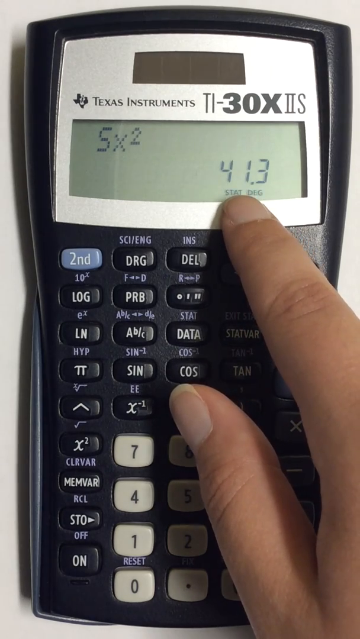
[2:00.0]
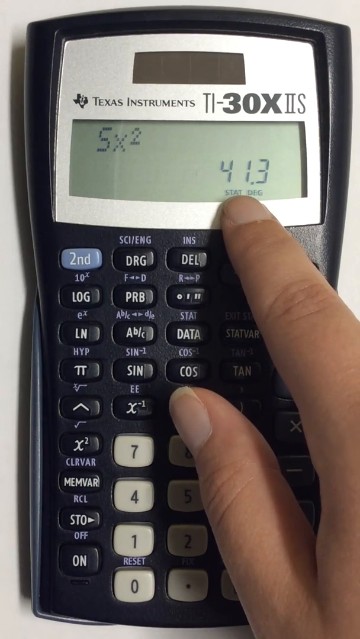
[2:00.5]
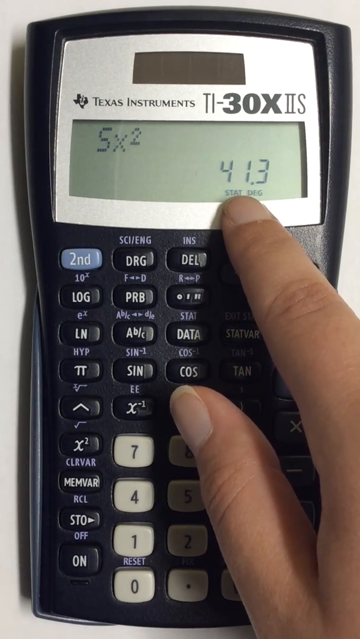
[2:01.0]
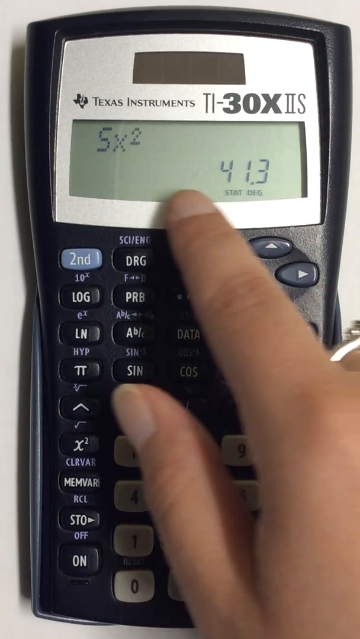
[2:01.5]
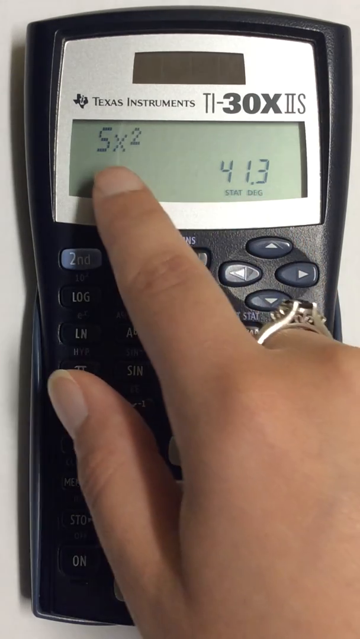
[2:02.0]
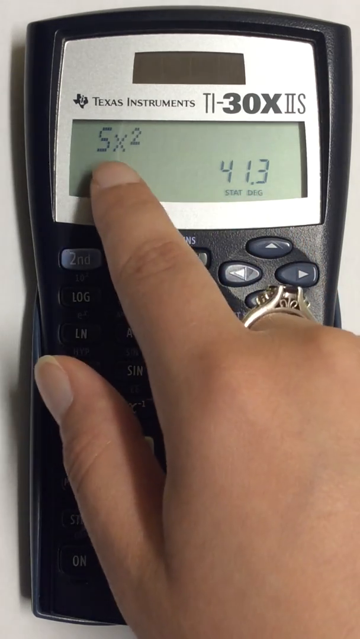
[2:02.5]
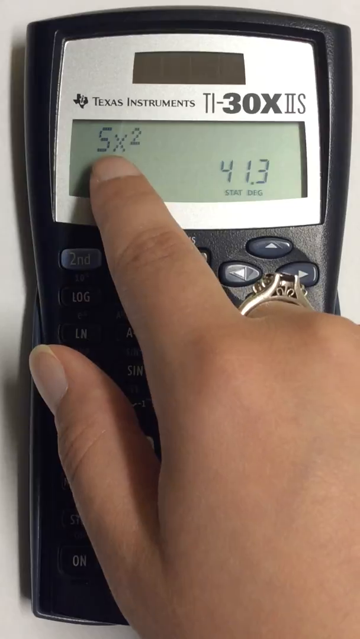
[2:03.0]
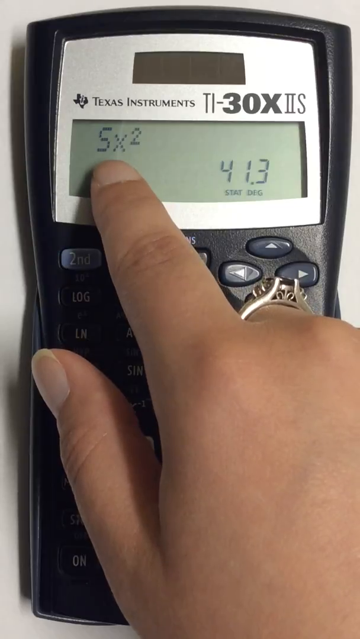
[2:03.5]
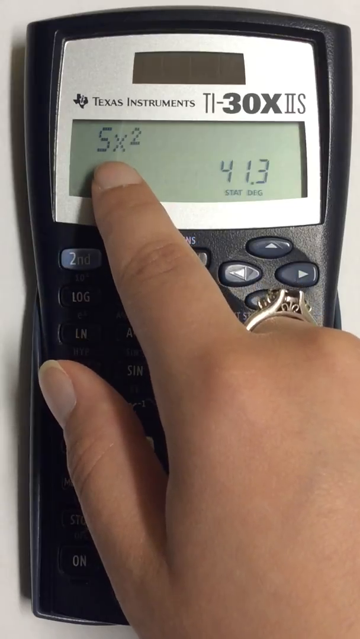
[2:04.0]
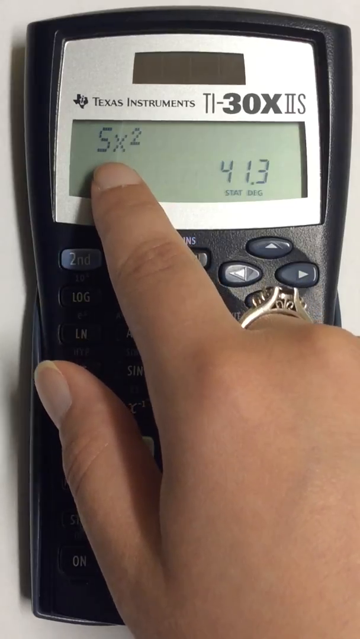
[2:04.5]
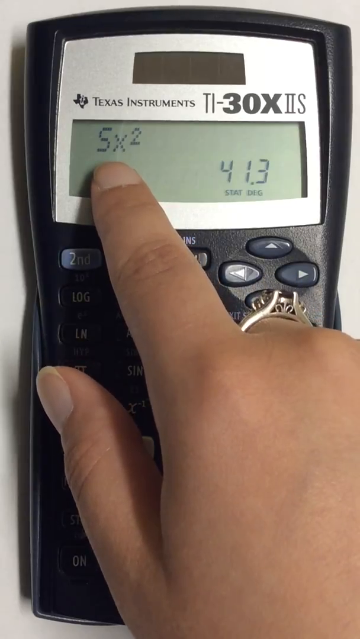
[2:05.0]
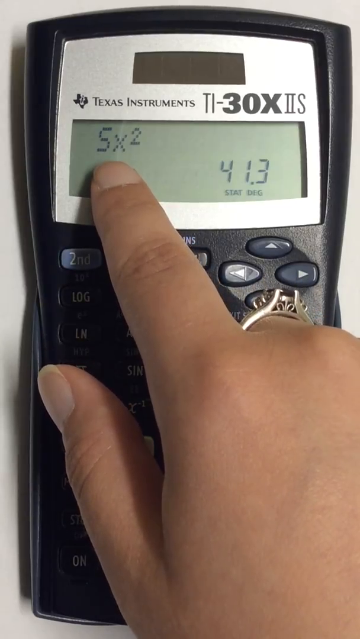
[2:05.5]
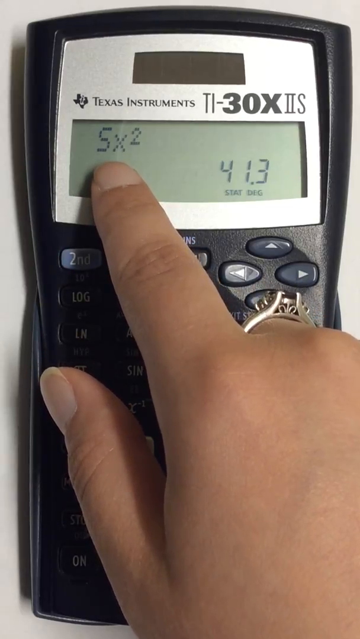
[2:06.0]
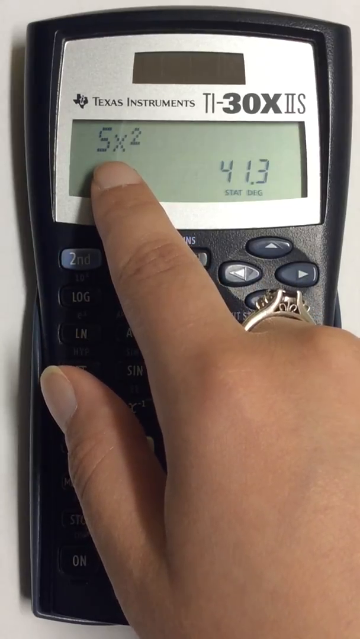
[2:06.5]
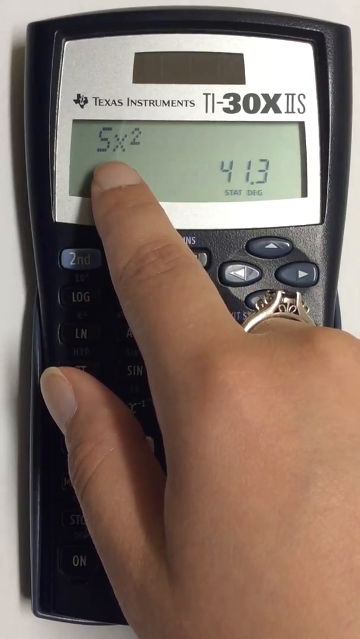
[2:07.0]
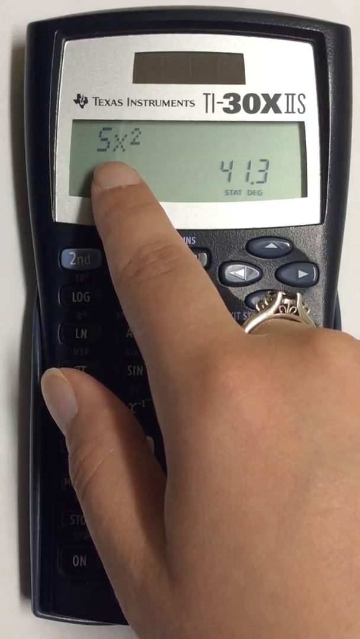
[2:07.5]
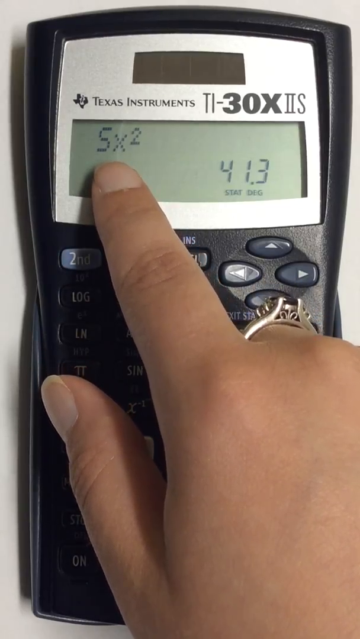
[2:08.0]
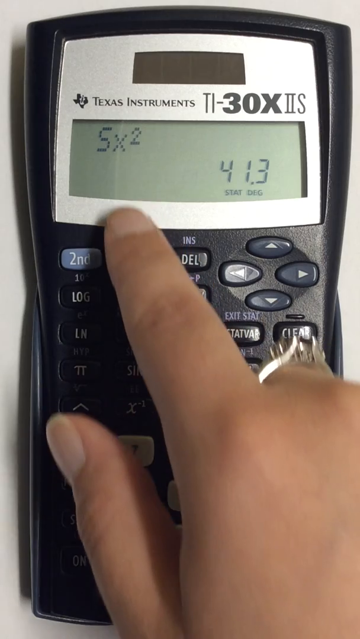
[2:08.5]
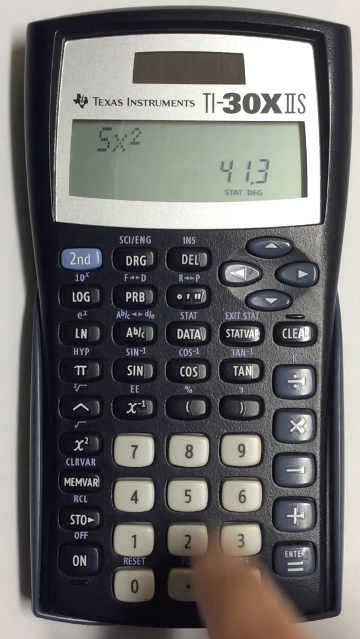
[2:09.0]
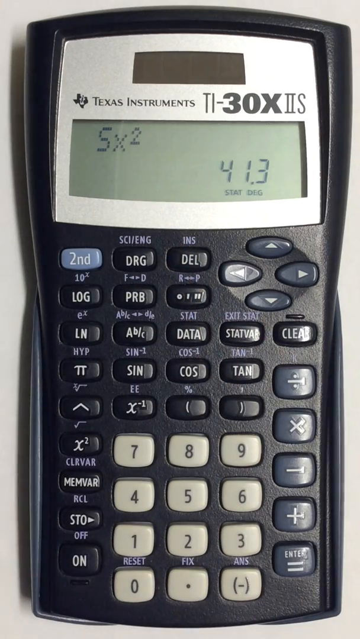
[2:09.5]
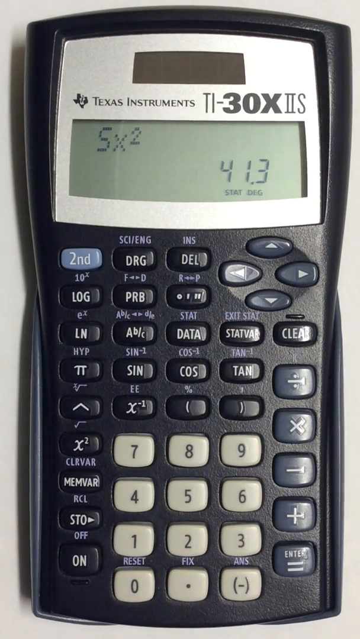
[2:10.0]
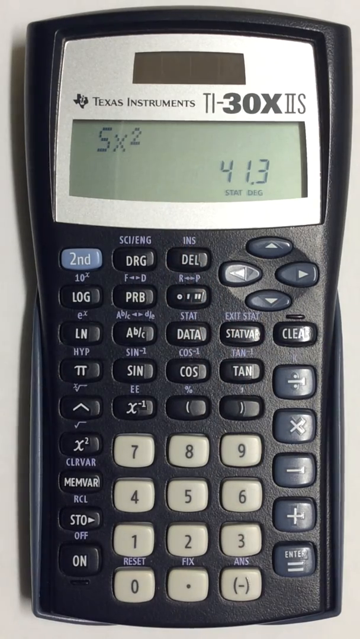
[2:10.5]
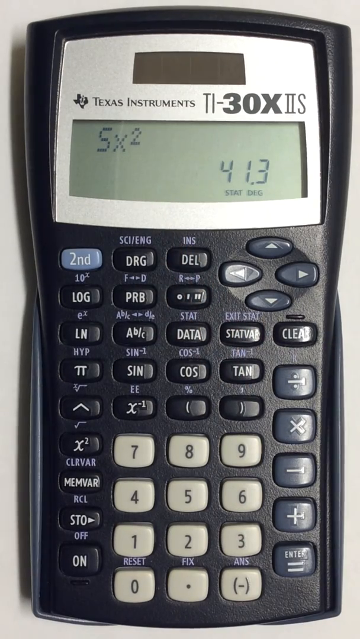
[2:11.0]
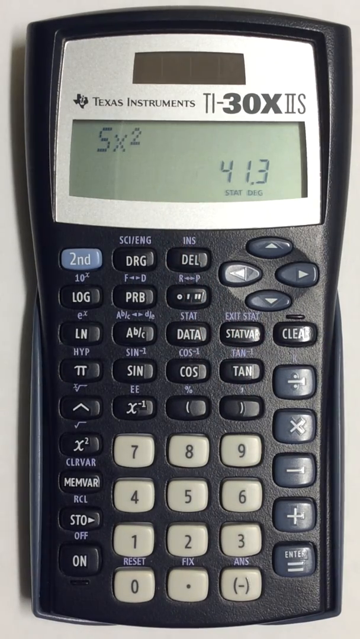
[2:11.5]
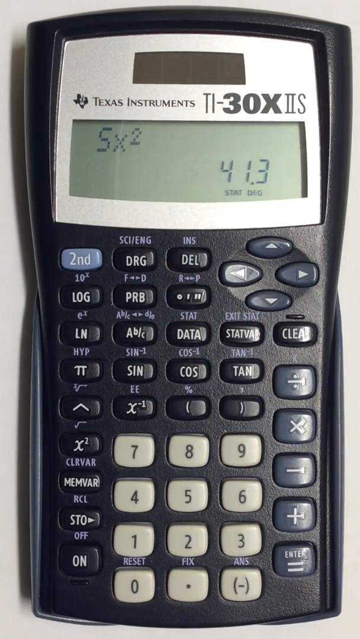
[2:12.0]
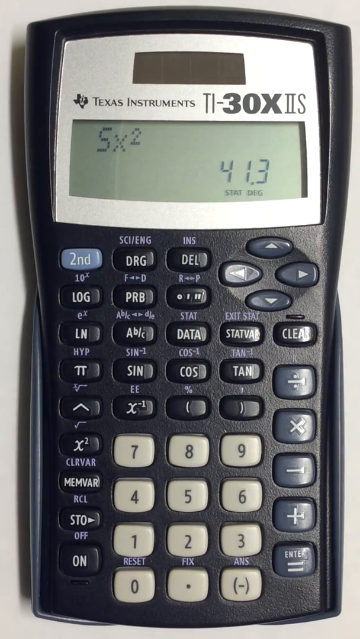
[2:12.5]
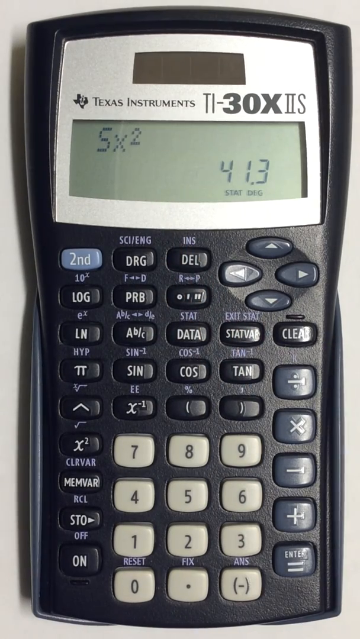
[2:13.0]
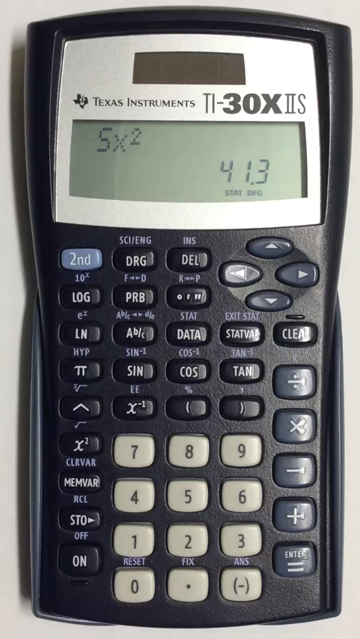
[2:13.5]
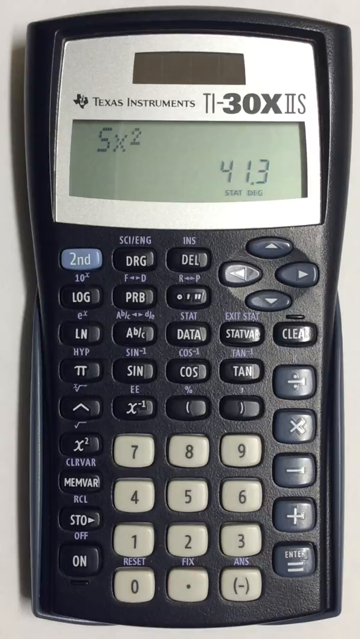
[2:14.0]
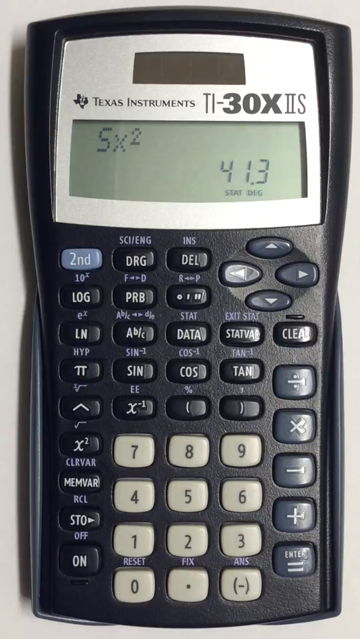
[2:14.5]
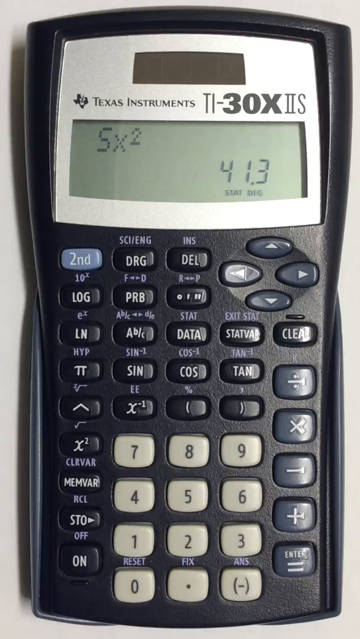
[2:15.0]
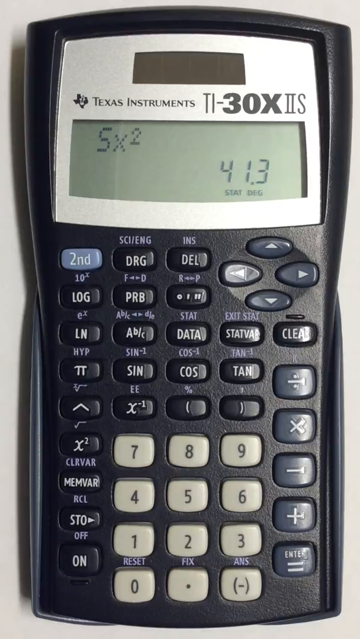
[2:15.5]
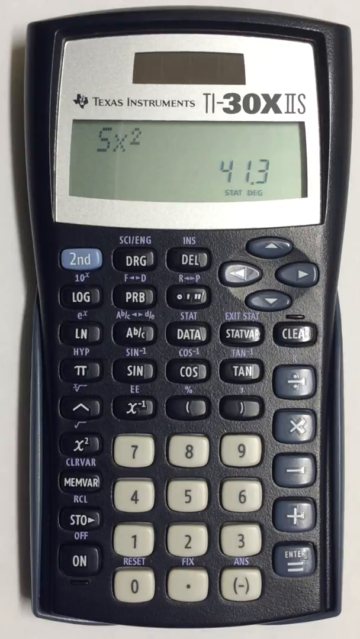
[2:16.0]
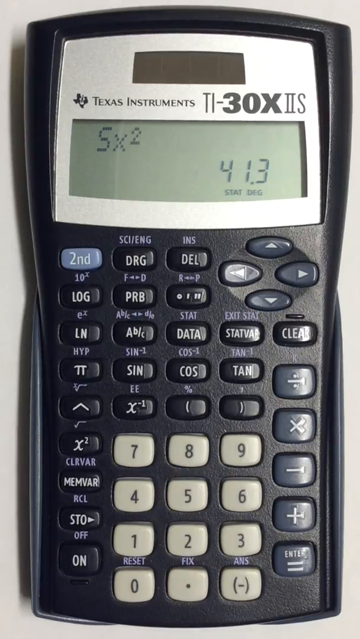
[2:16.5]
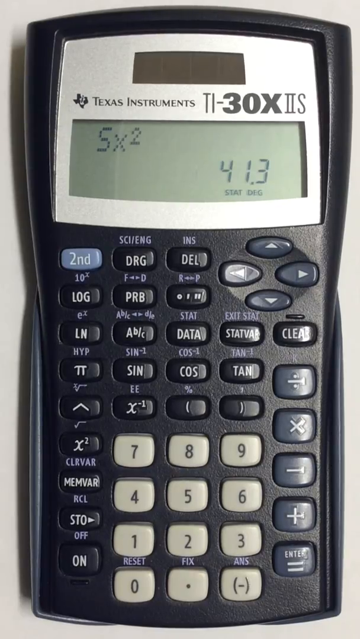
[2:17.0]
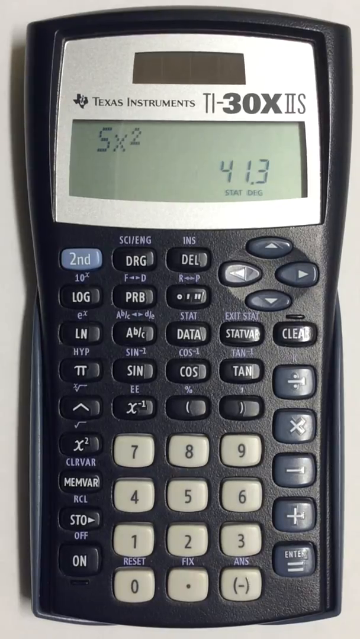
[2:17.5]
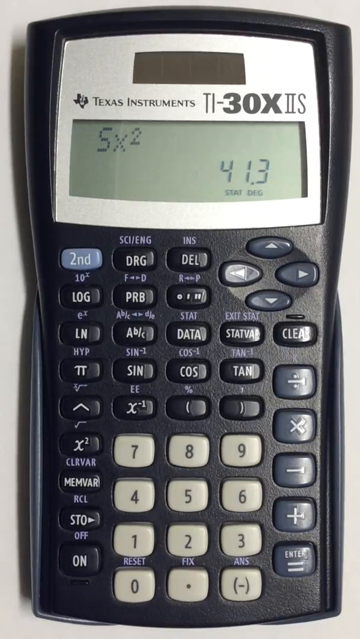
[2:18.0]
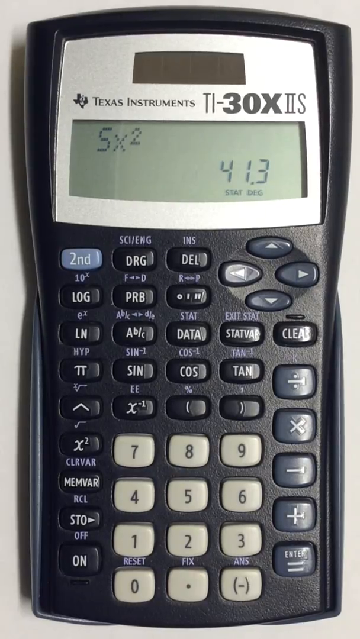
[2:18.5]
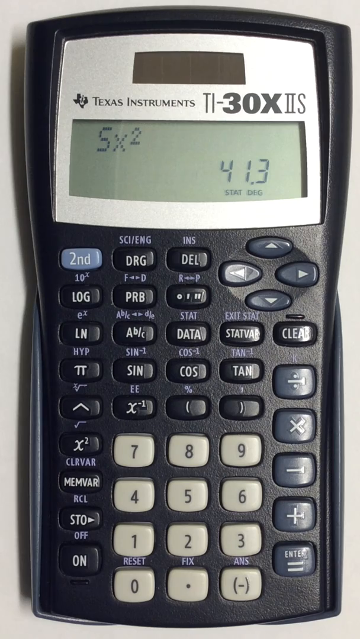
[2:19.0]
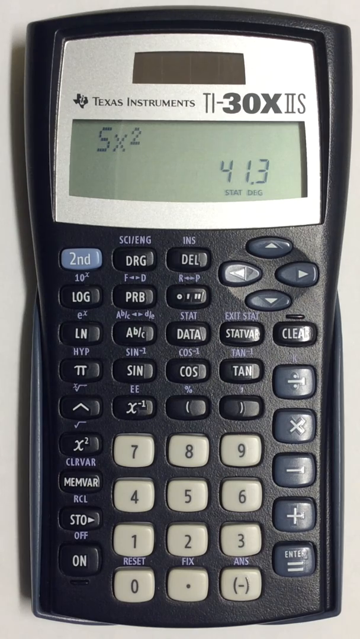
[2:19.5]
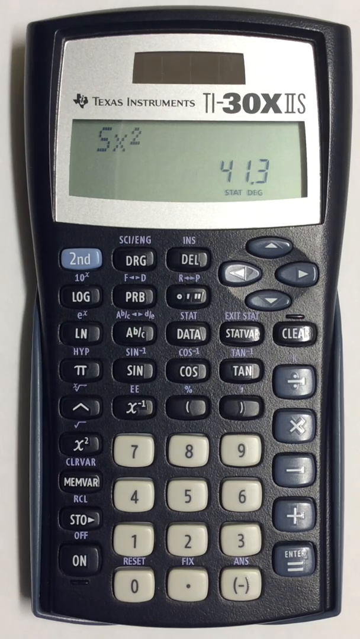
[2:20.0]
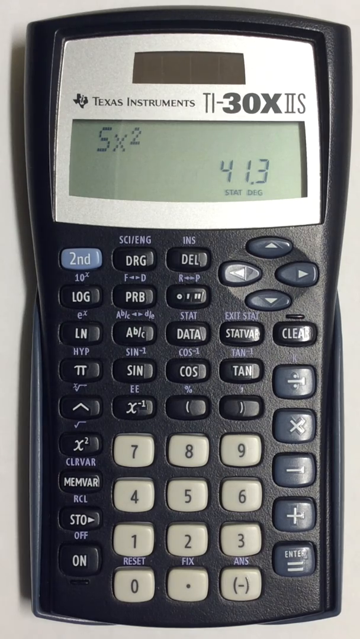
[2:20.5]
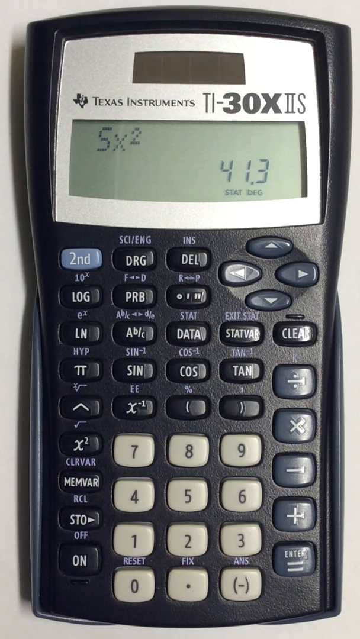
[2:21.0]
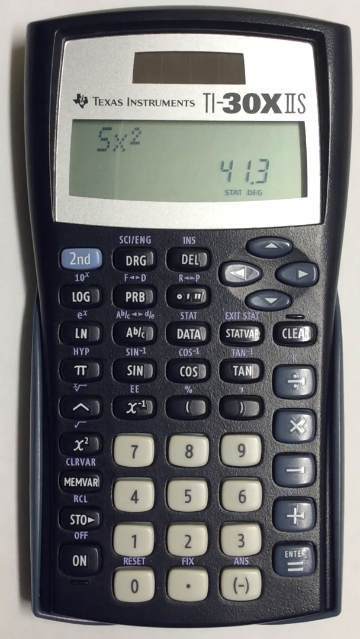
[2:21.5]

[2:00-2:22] A blue and silver Texas Instruments 30X2 calculator's display screen shows "SX2" and the number 41.3. A person's hand points toward the display. The dark blue buttons say things like "log", "SIN", "cost", "data", "delete" and "DRG", there is a lighter blue button that says "second", and gray buttons show numbers such as 0, 1, 2, 4, 5, 7 and 8. The person points at the 41.3 and then at the "SX2"; a ring is visible on their finger. The hand then goes off screen, leaving just the calculator in view. Additional buttons are visible, including one that says "tan", division, multiplication, subtraction, addition and equal sign buttons, and a clear button.